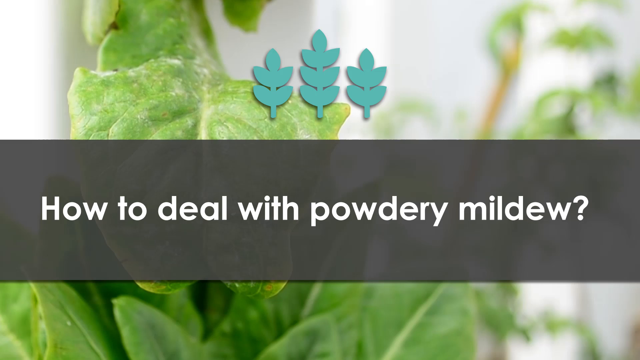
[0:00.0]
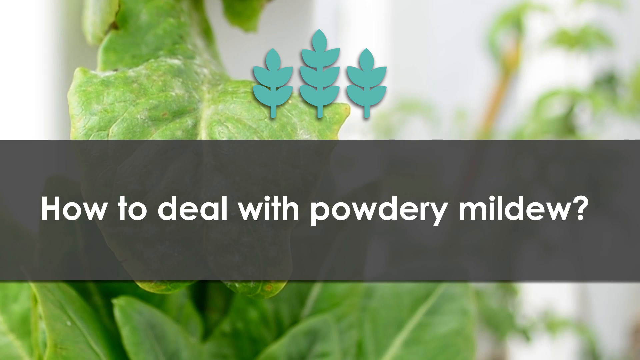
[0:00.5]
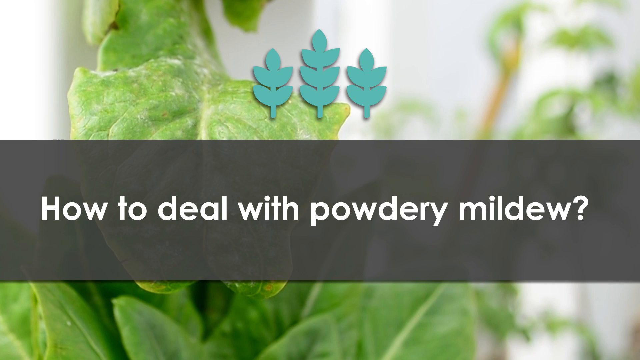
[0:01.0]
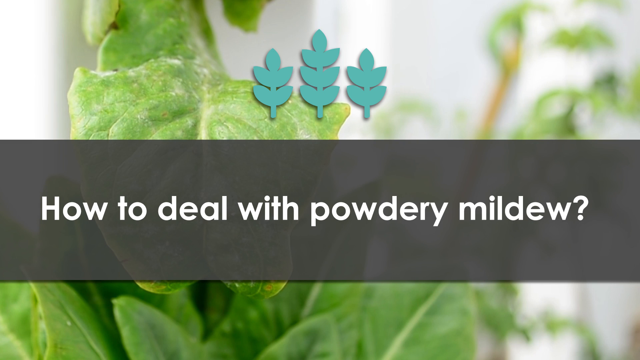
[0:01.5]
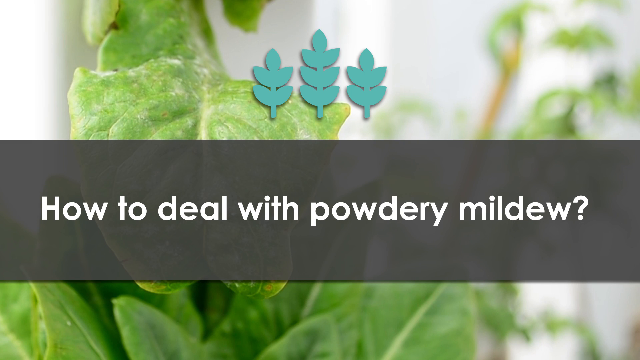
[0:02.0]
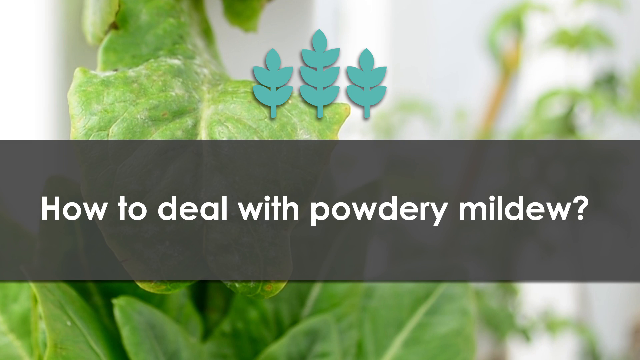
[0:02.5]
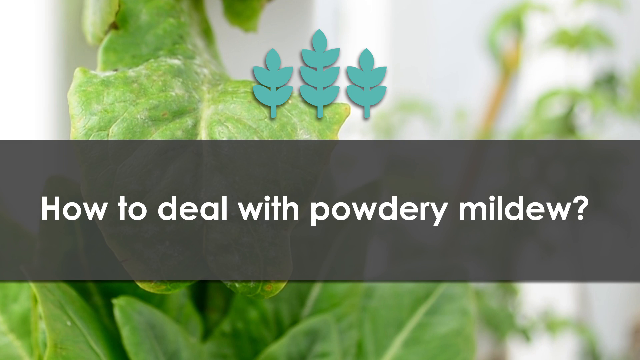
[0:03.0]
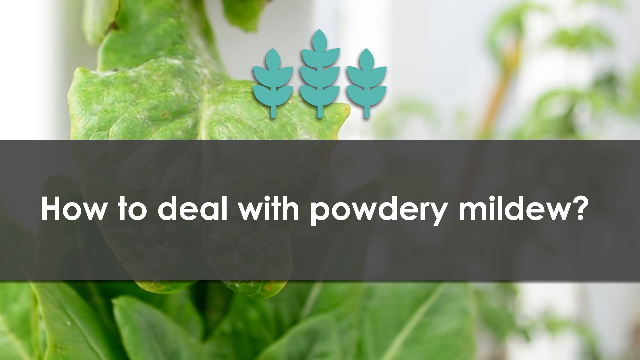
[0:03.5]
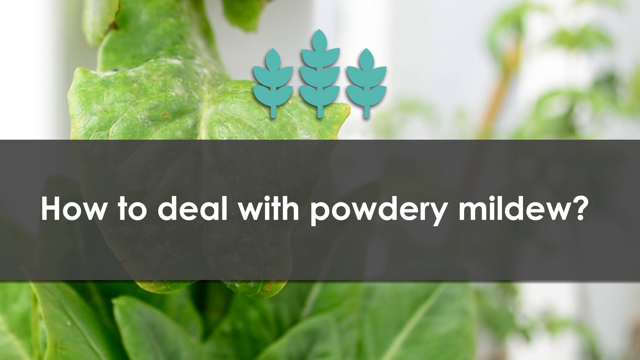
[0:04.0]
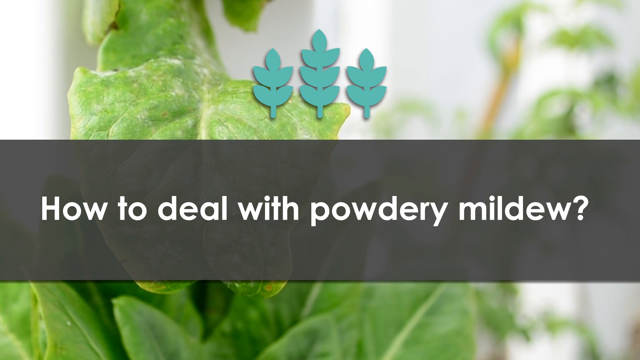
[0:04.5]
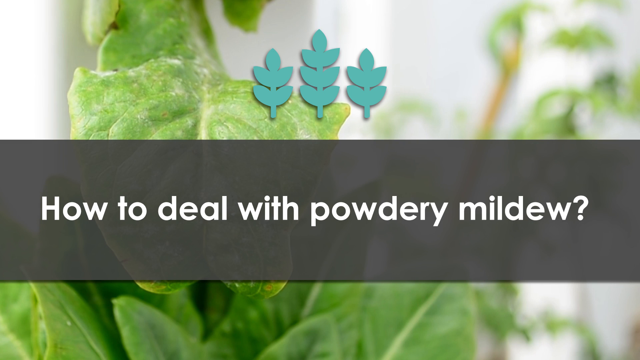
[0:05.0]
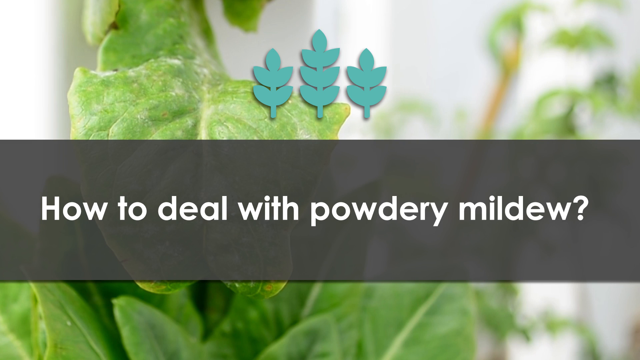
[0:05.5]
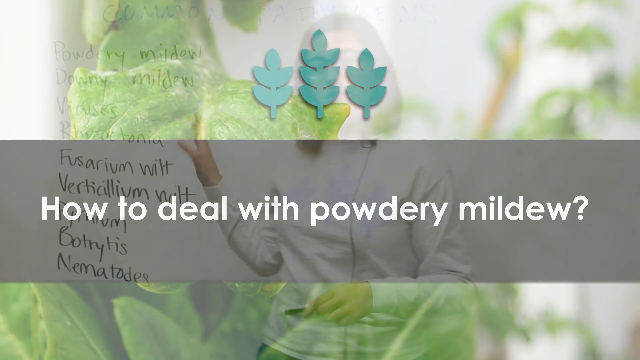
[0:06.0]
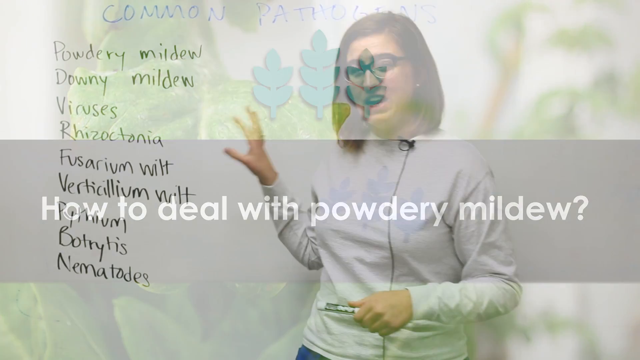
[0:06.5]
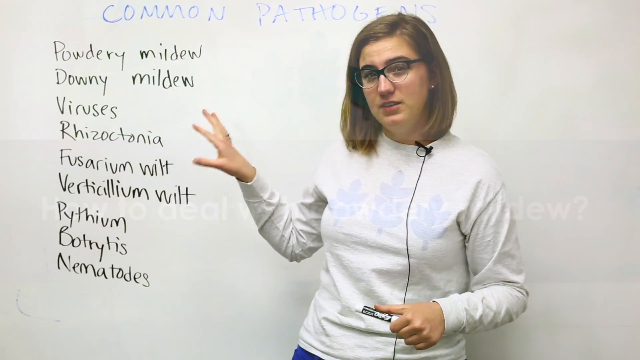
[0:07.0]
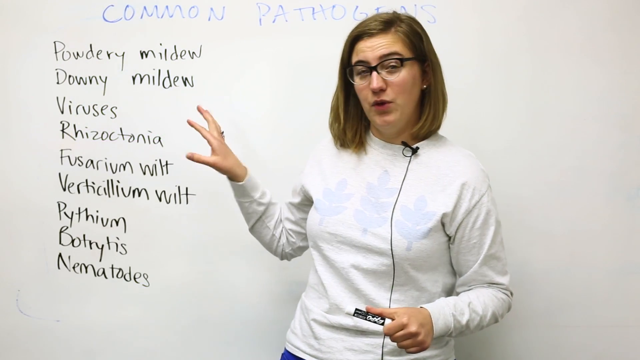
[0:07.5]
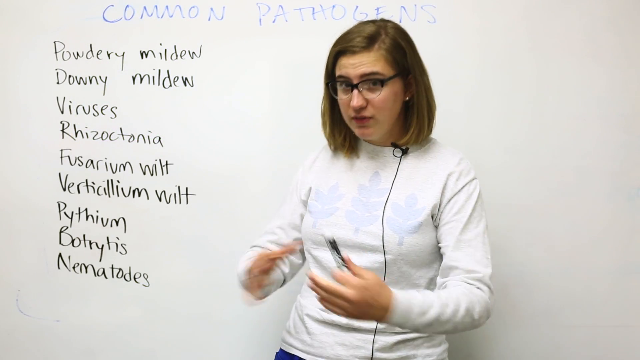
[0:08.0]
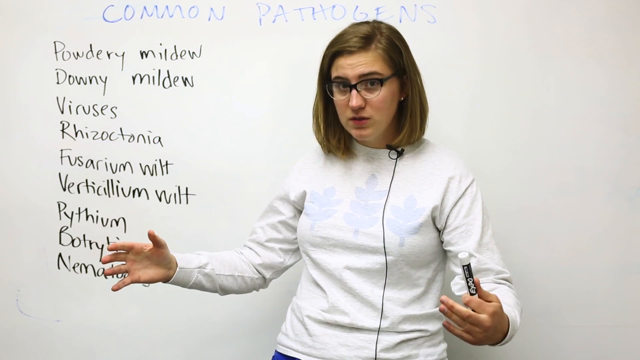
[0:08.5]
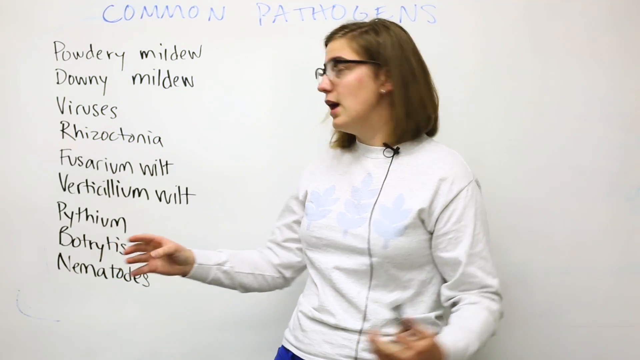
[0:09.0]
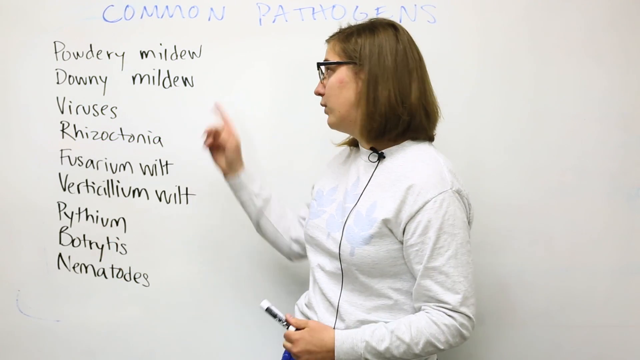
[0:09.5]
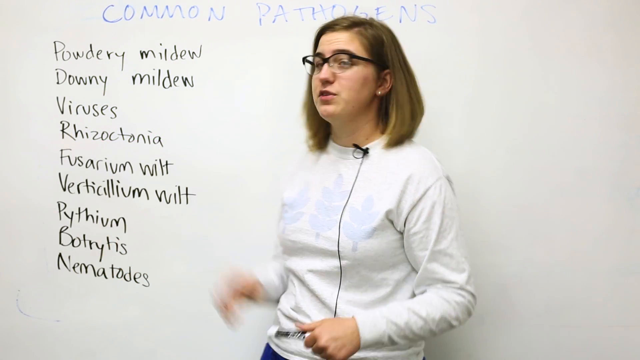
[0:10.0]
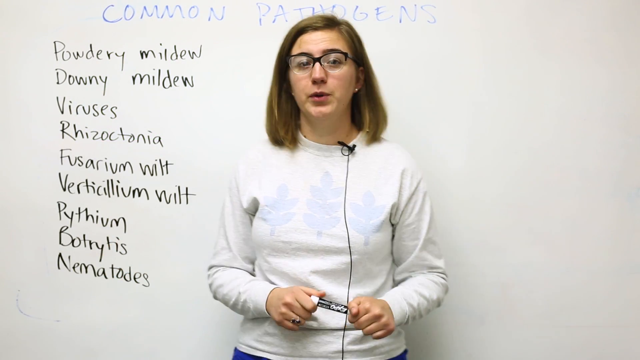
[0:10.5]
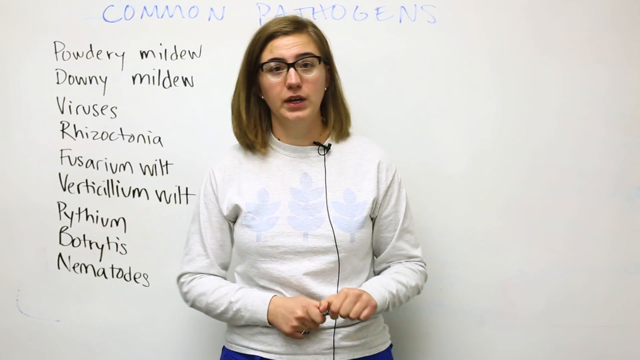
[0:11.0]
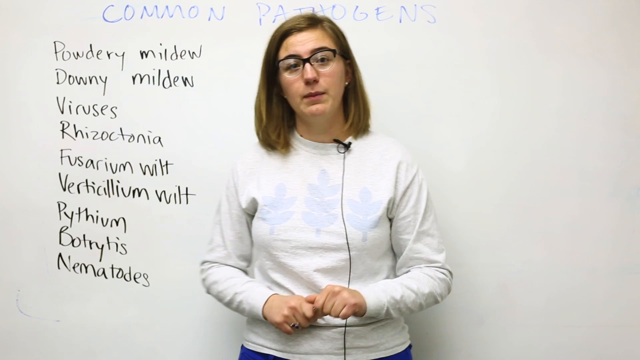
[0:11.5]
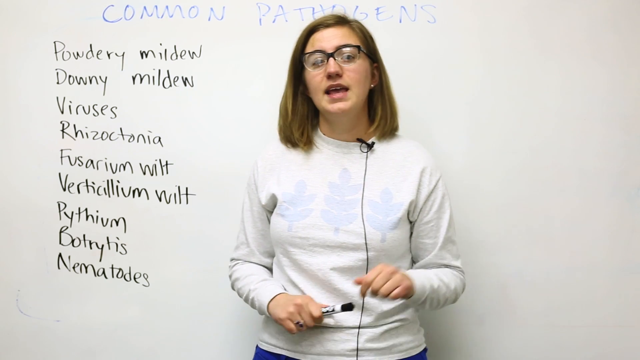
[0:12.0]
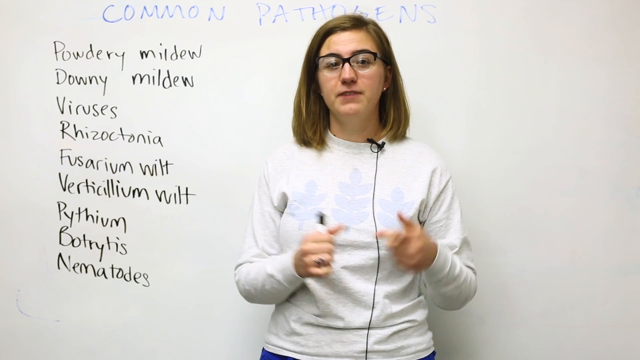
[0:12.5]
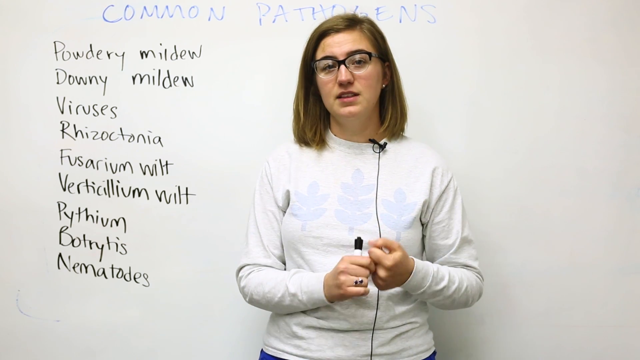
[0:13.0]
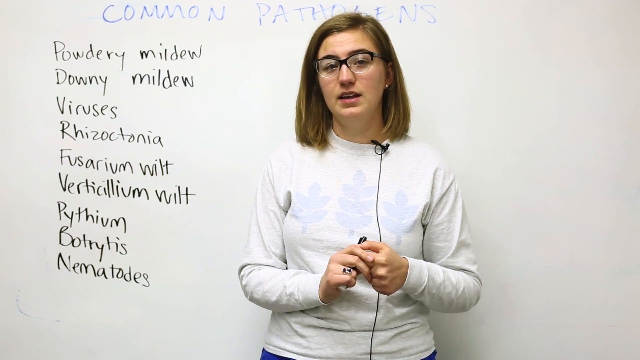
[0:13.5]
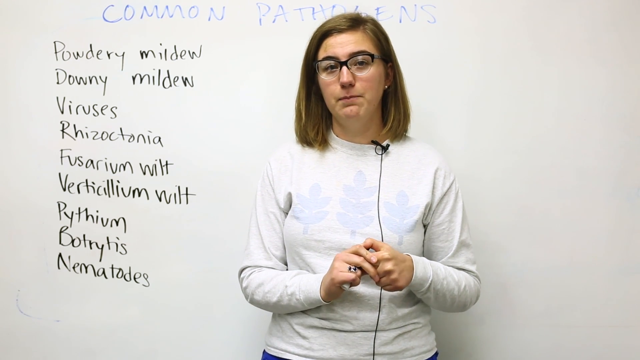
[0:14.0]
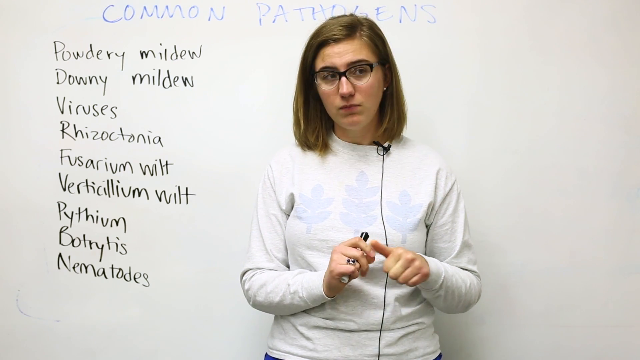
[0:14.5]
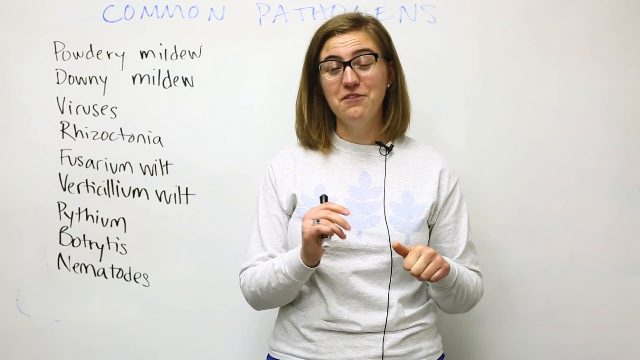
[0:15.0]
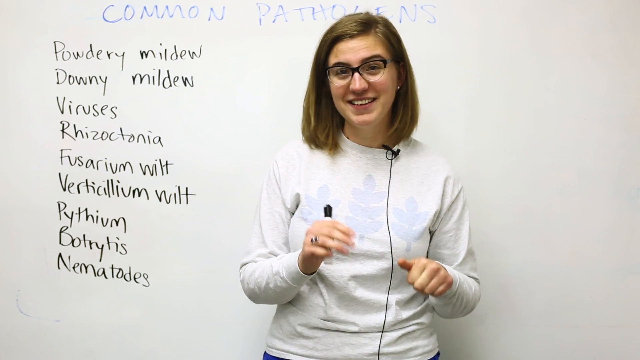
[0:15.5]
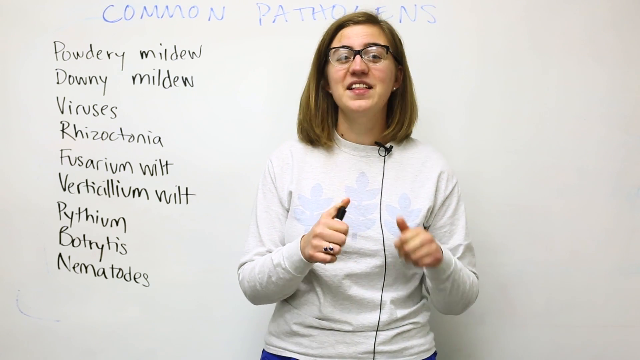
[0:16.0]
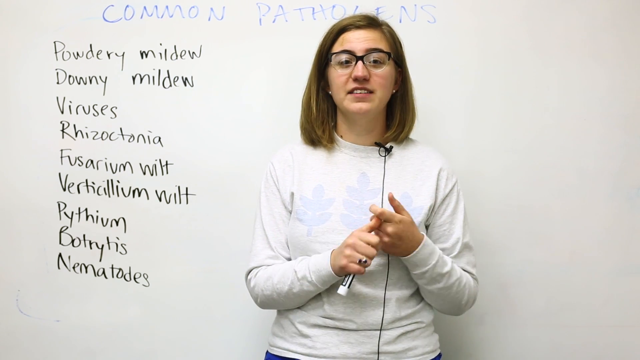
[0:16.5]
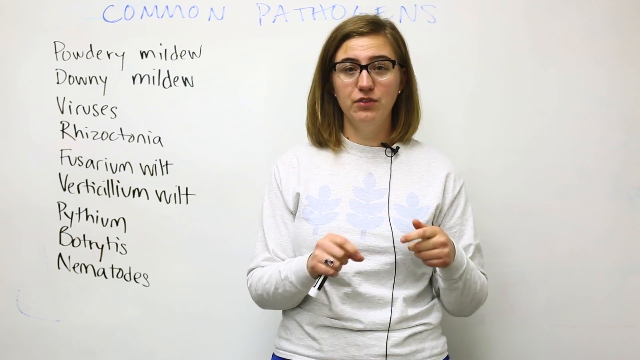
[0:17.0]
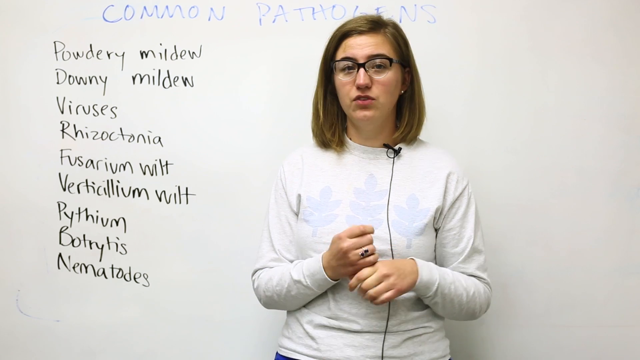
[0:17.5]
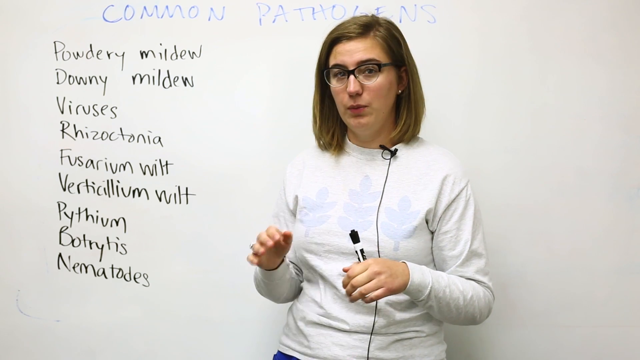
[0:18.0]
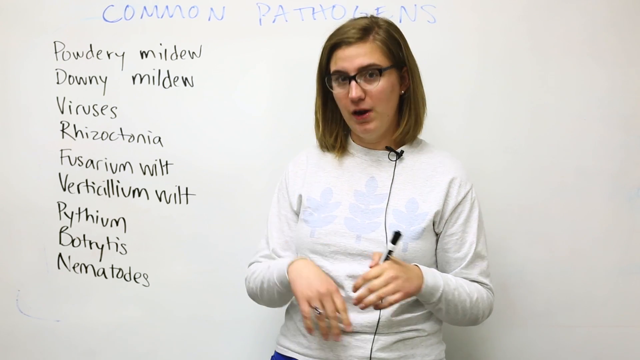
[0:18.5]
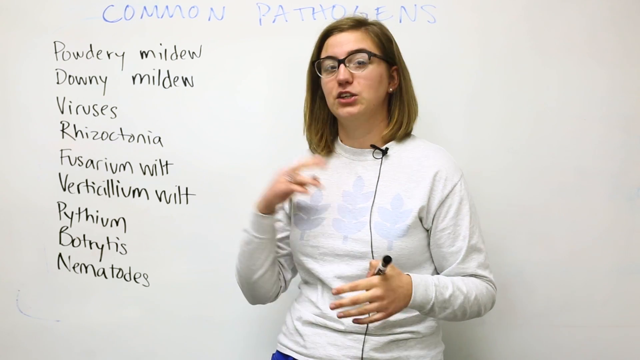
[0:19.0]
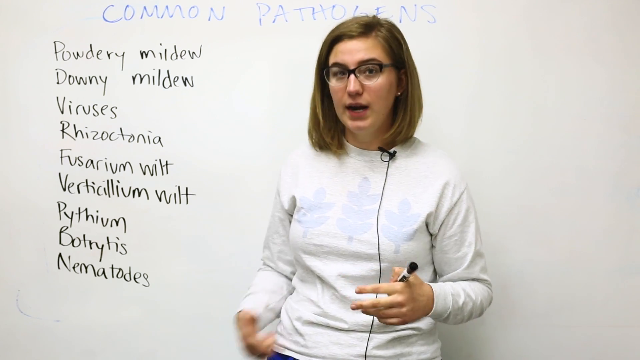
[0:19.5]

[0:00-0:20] The video opens with the title "How to Deal with Powdery Mildew" over leafy greens in the background, which look like some type of plant. A woman in a white shirt then talks on camera. She appears to be holding a magic marker in her left hand, and while she talks she spreads her hands out from her body. She also turns and points to the whiteboard behind her, which she has written on with the marker. At the top, in blue ink, it says "common pathogens". Below that, in black marker, she has listed a number of terms, including "powdery mildew", "downy mildew", "viruses", "verticillium wilt" and "pythium". Many words are written on the whiteboard.